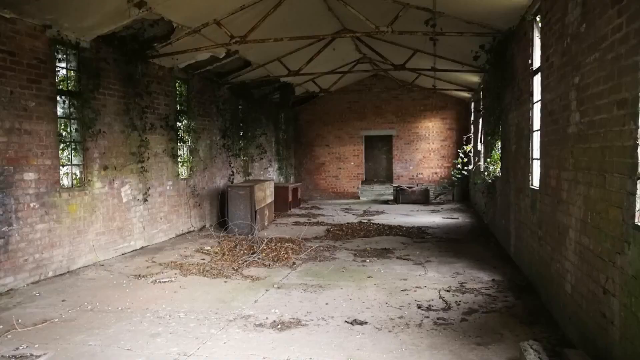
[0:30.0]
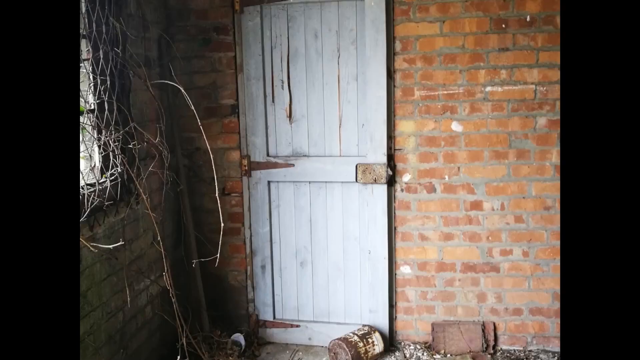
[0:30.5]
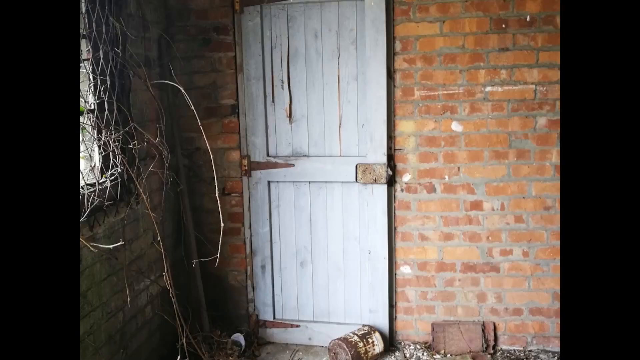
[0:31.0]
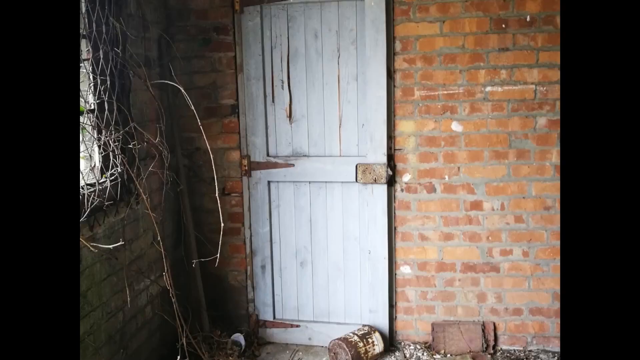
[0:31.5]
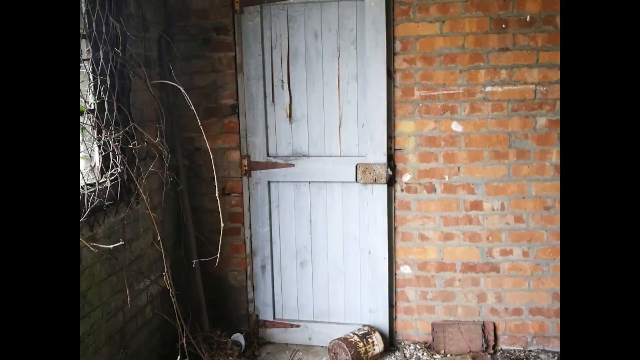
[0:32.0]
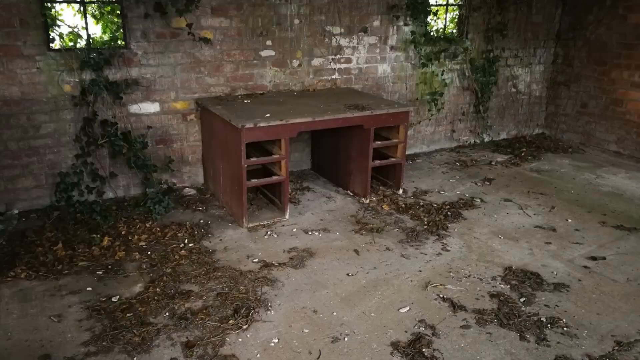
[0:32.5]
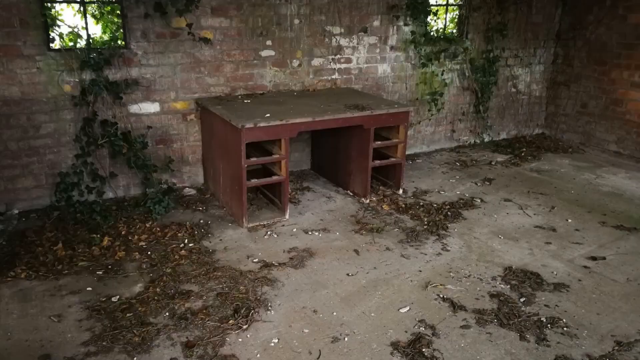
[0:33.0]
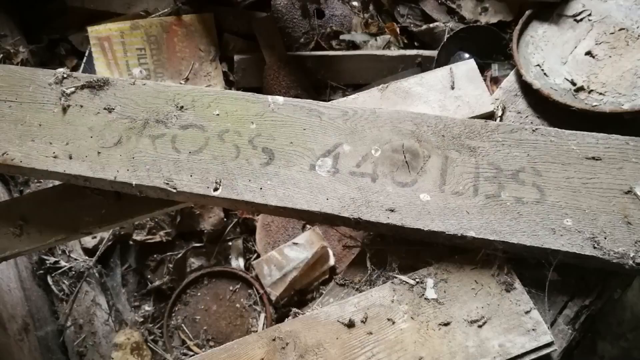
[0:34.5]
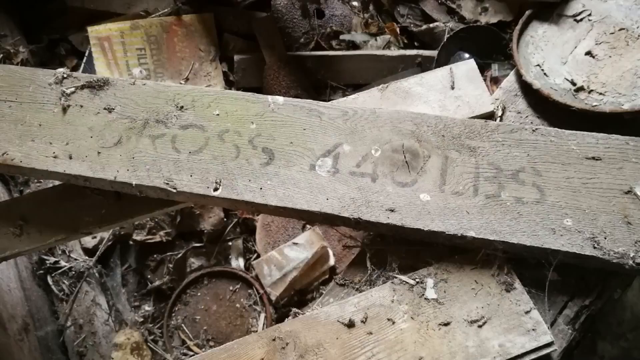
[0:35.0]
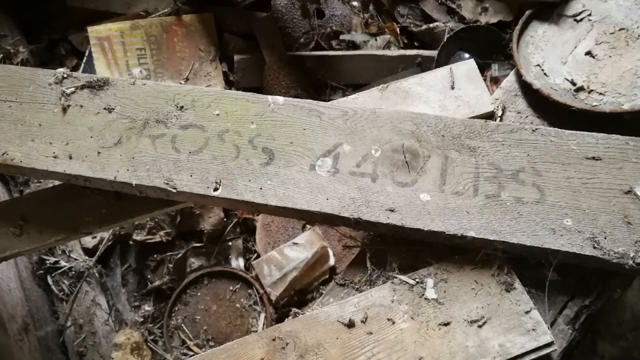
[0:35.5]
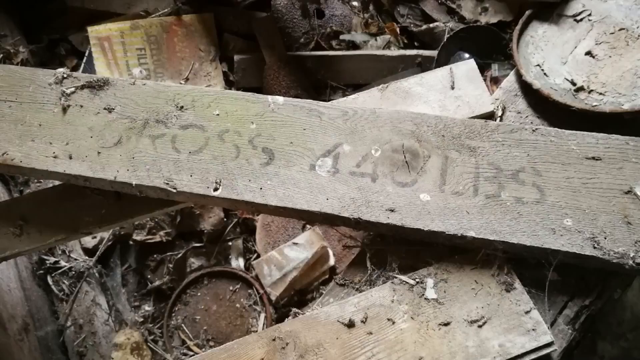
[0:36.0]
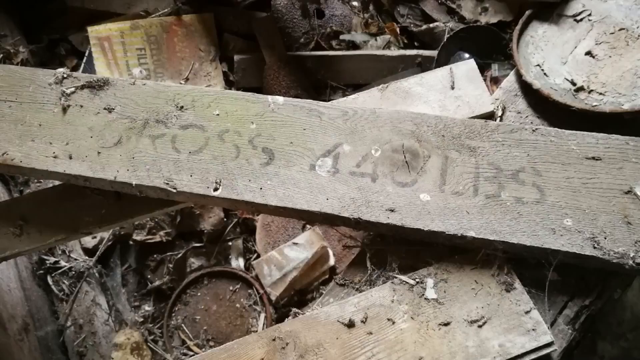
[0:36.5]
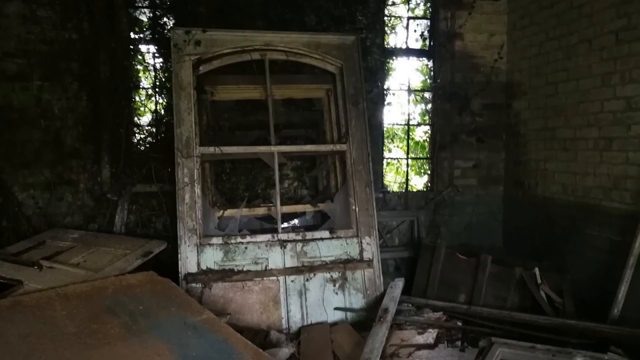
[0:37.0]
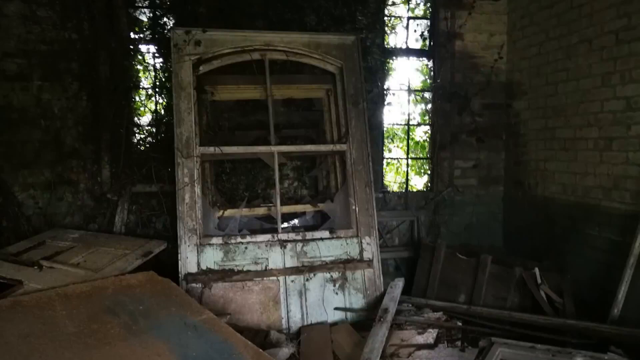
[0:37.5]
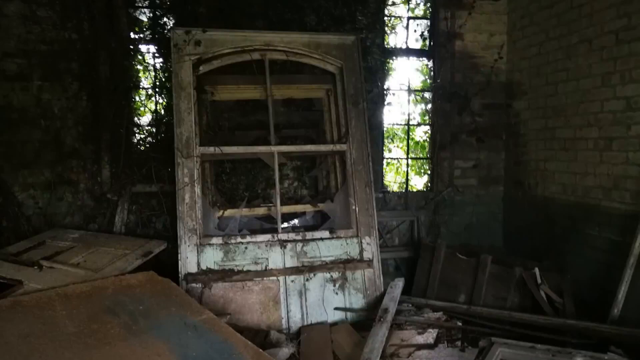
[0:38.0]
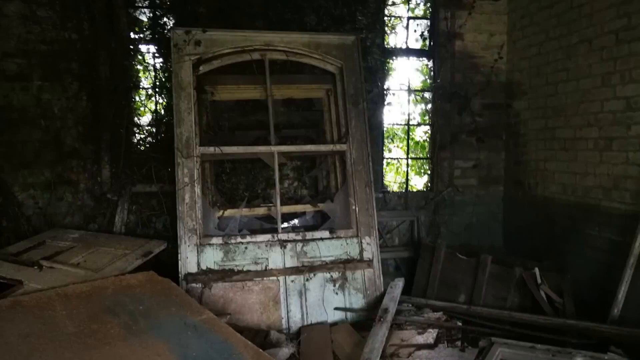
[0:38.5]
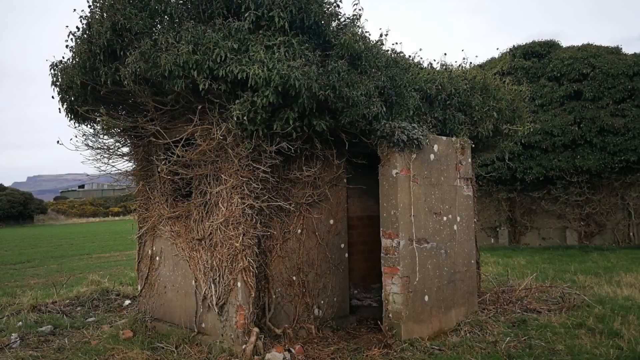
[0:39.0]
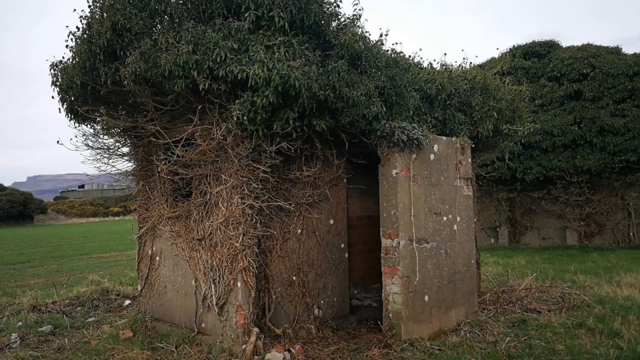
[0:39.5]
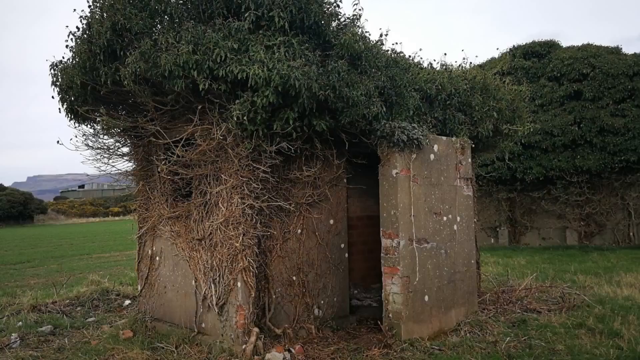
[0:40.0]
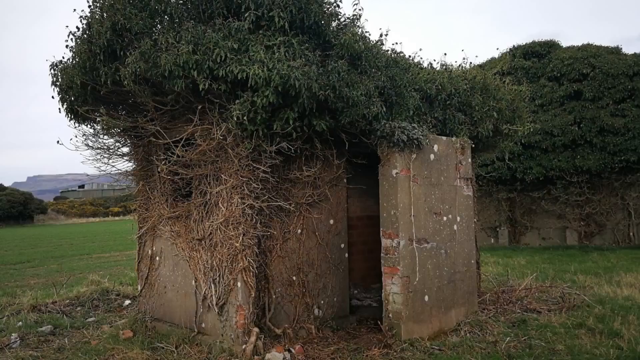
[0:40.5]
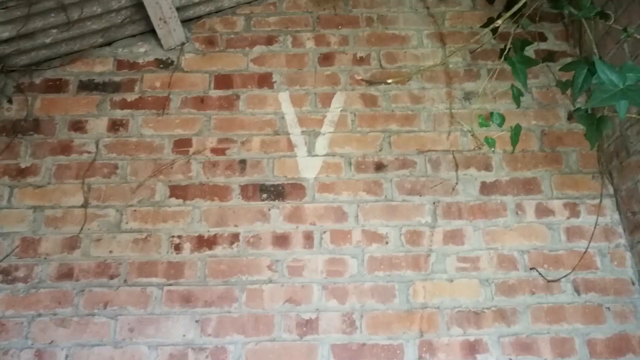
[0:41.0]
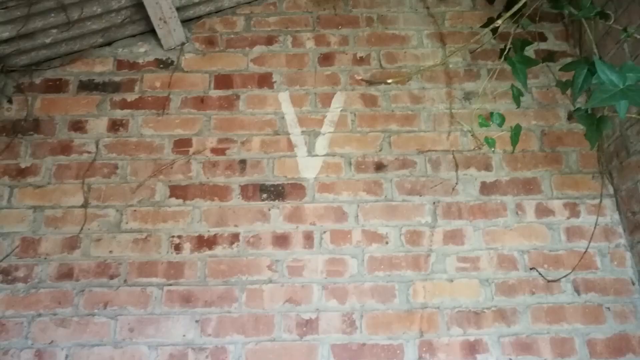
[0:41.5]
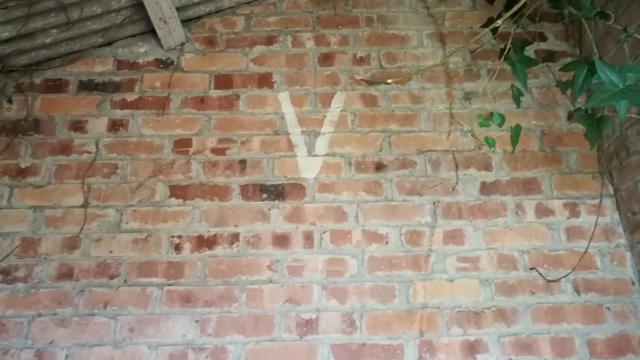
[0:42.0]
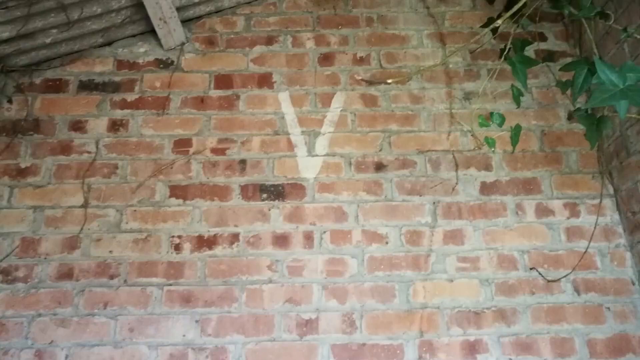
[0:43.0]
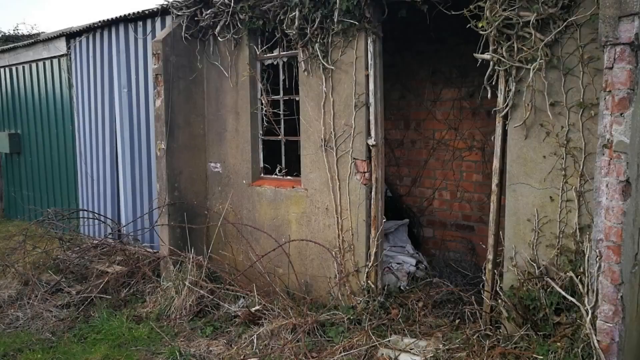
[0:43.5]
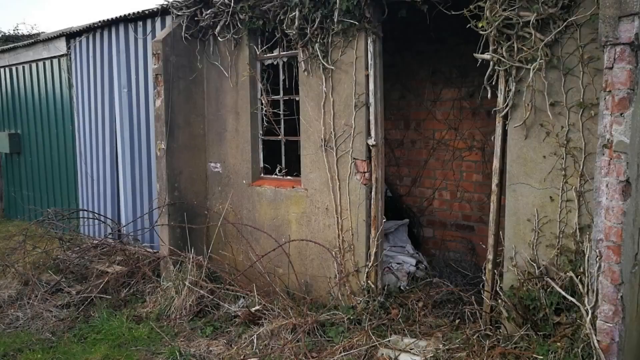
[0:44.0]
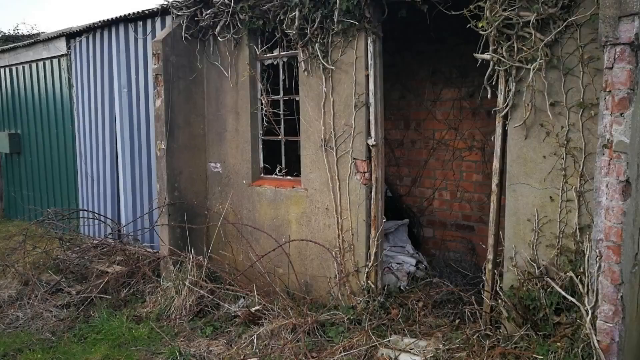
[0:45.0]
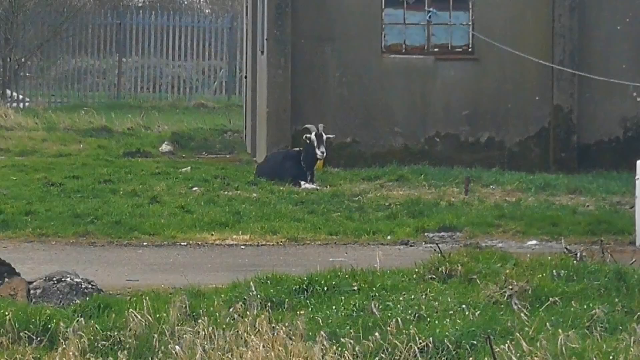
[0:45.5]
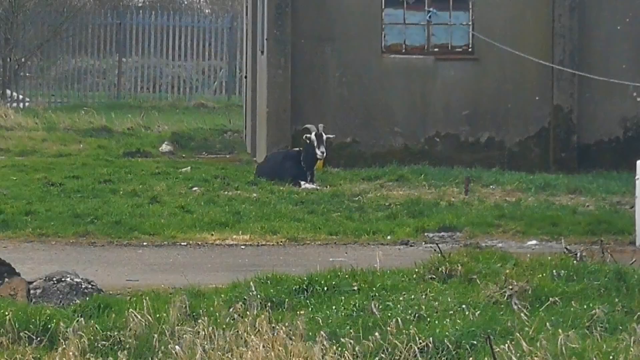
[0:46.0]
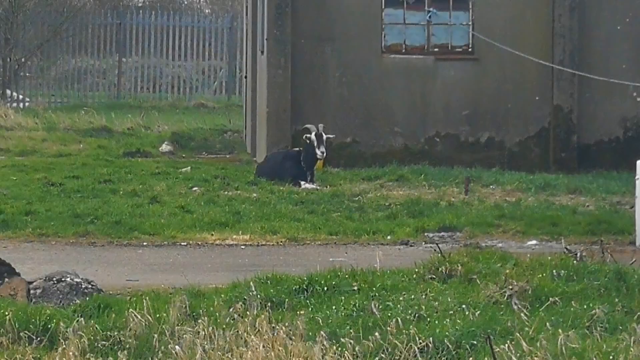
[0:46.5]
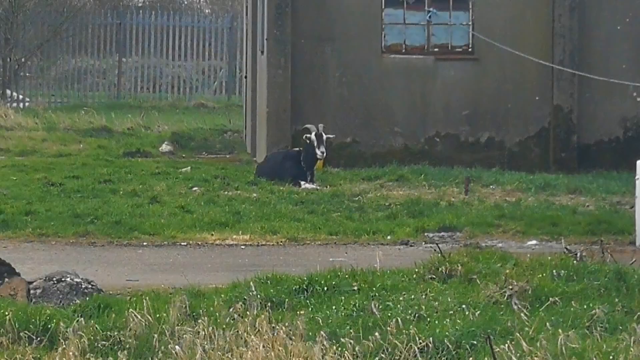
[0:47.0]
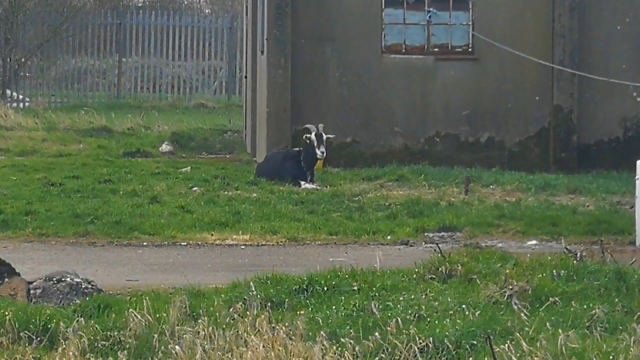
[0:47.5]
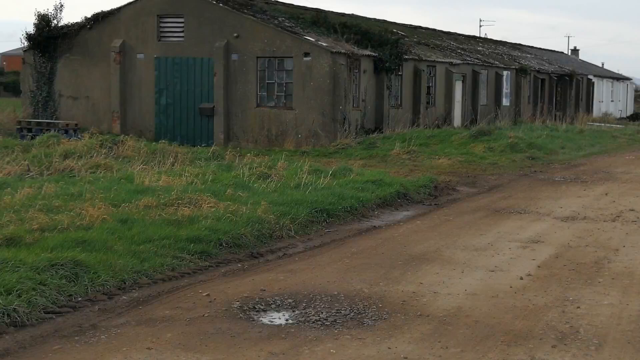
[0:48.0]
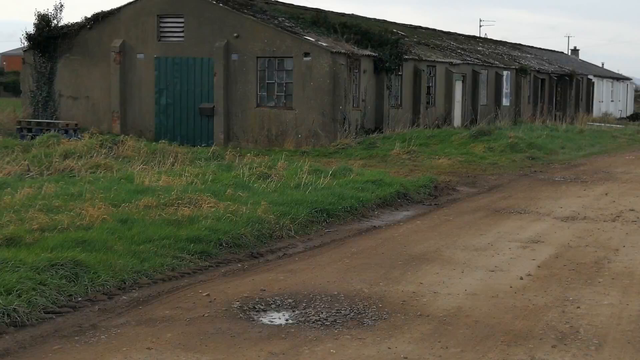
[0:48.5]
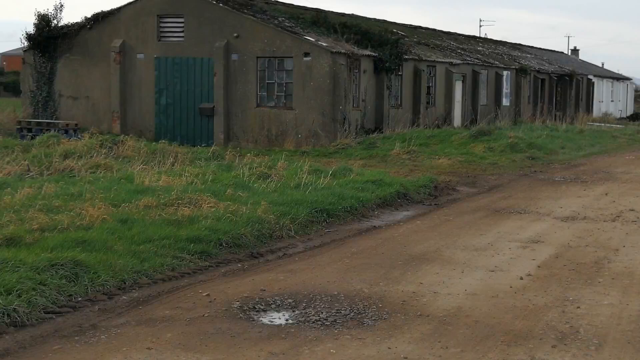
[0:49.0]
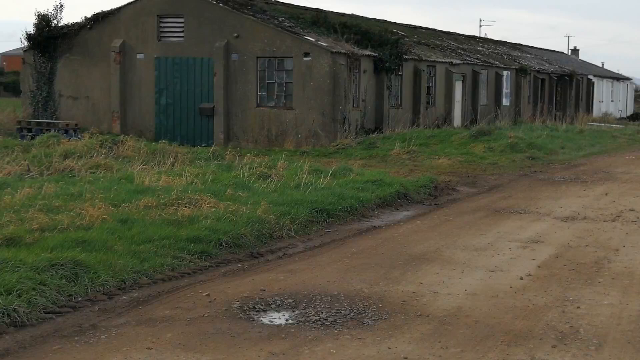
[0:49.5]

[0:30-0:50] An abandoned structure is shown inside and out. Inside there is very little; it looks like it was moved out of and abandoned. There are vines, broken windows, rotting doors, and red brick, with vines growing in from outside through the windows. An old desk has been left to rot, and random items are on the floor, including a 2x4 with the words "cross" or "gross" and "448 pounds." There are what look like tops of cans lying there, rotted. Everything is rotted. Doors have been removed and dropped on the floor. It is dark in some places and light in others; in some places the windows cannot be seen through because vegetation has grown over them, letting in only peeks of light. Images of the outside show it overgrown by thicket and vegetation, with the doors off.